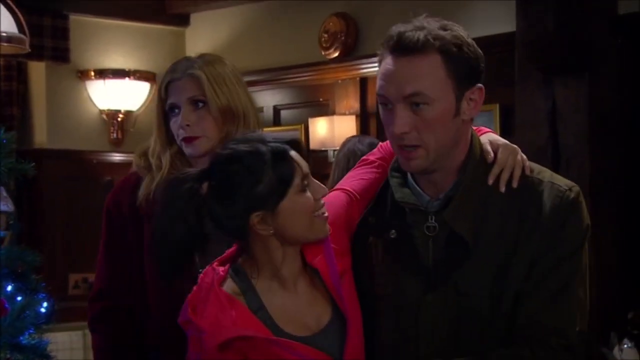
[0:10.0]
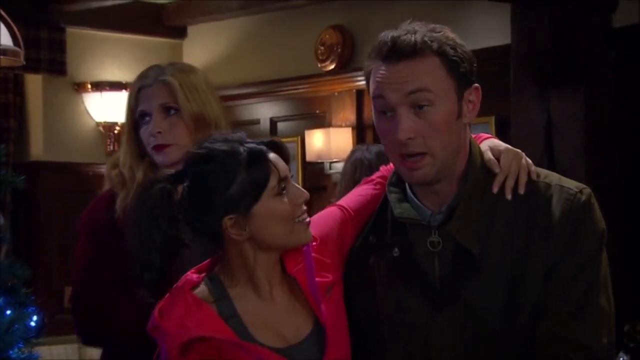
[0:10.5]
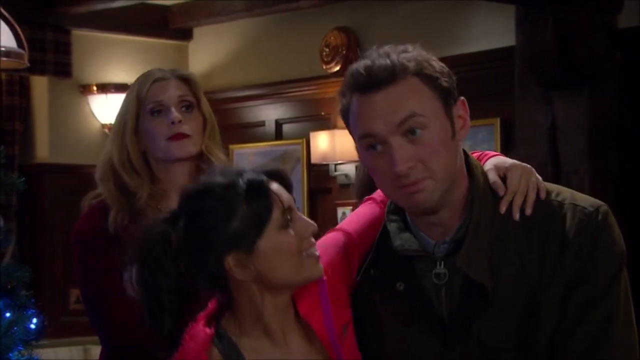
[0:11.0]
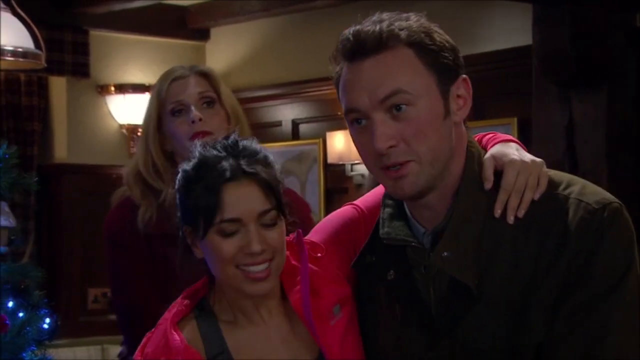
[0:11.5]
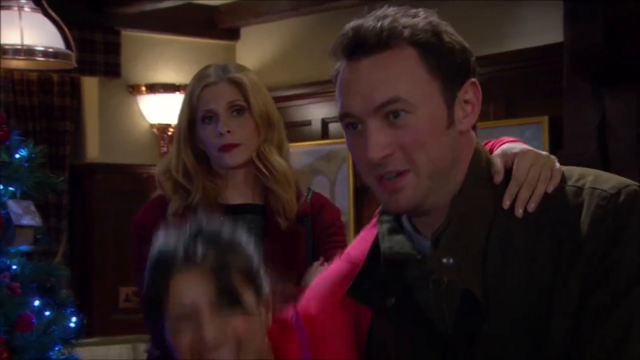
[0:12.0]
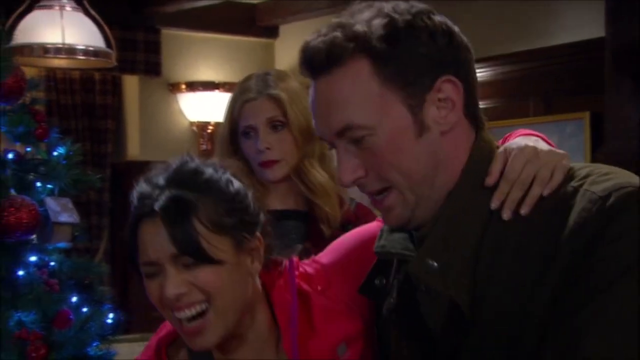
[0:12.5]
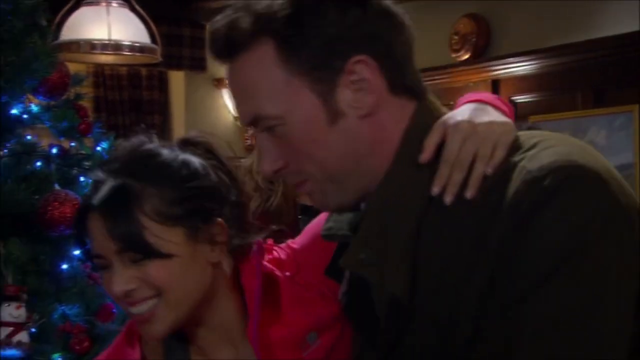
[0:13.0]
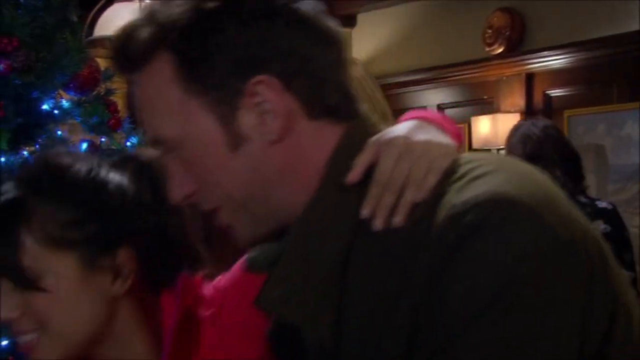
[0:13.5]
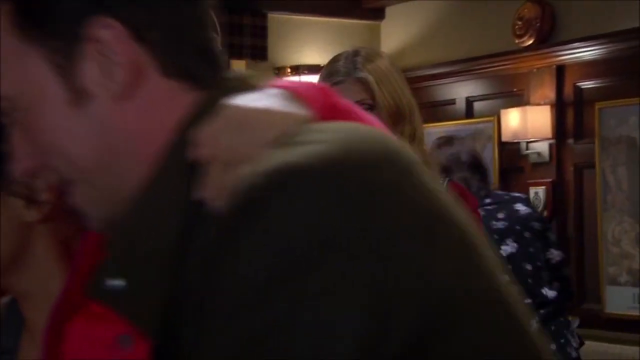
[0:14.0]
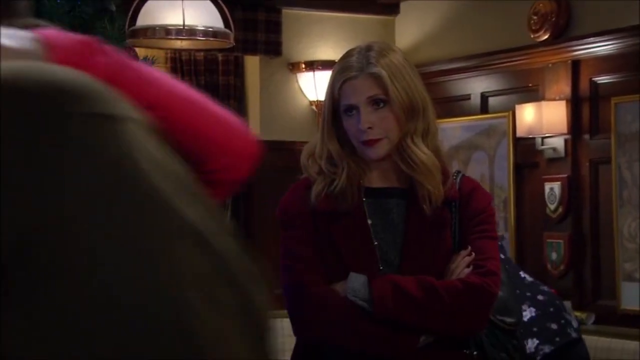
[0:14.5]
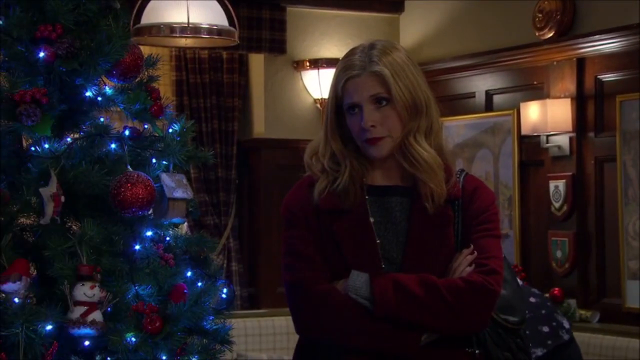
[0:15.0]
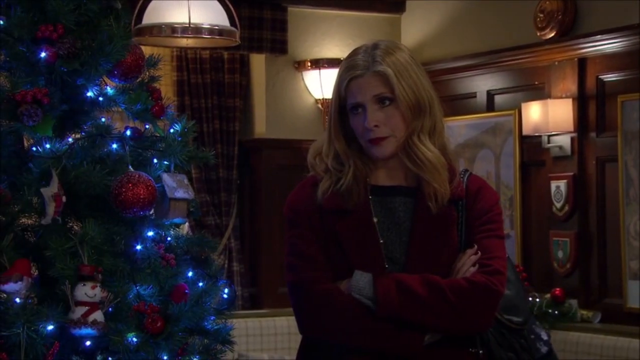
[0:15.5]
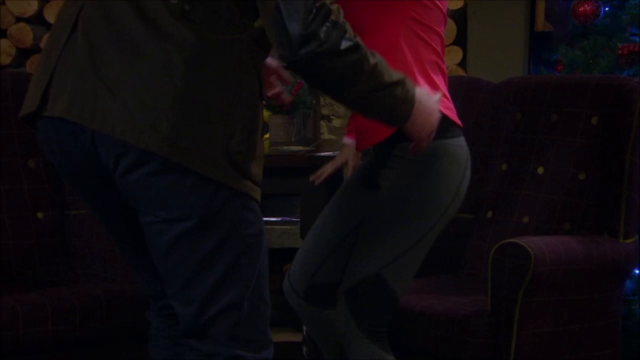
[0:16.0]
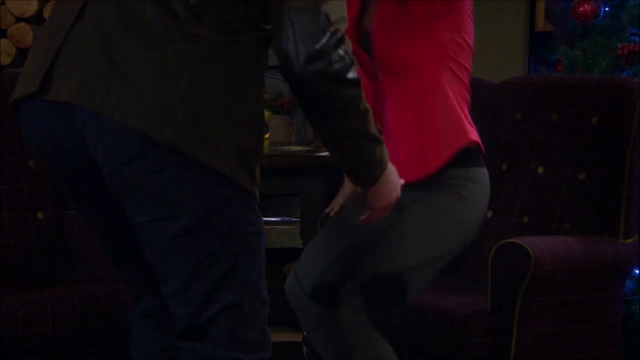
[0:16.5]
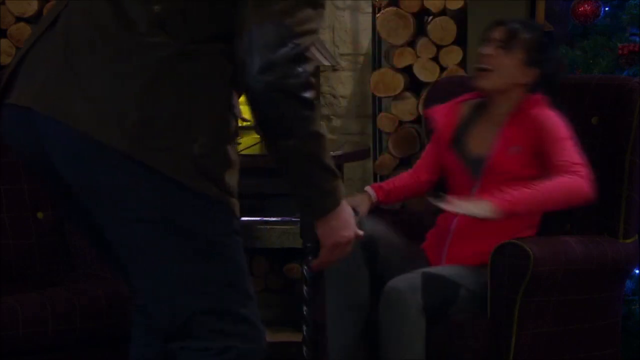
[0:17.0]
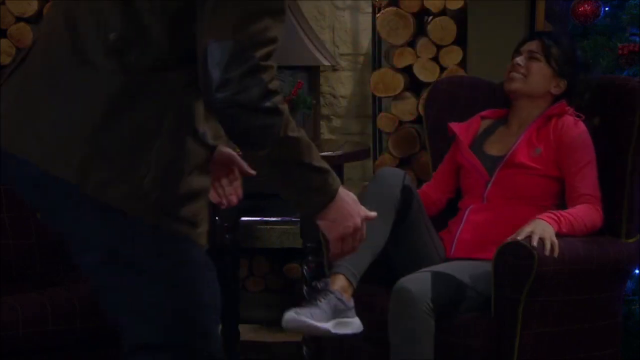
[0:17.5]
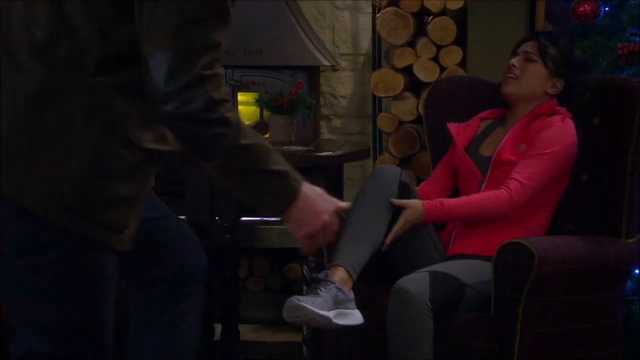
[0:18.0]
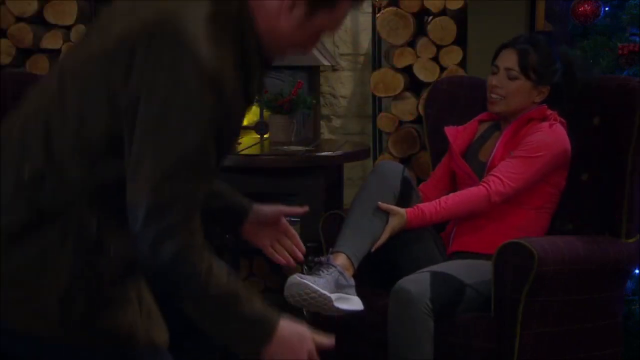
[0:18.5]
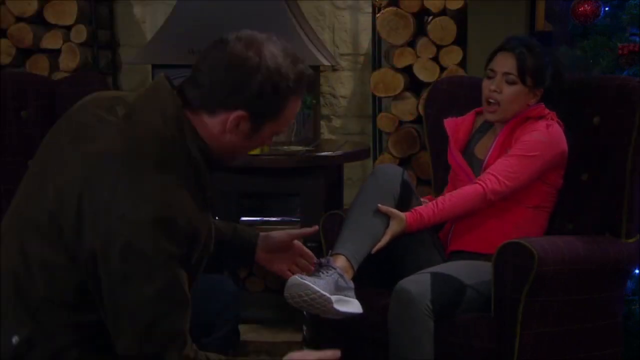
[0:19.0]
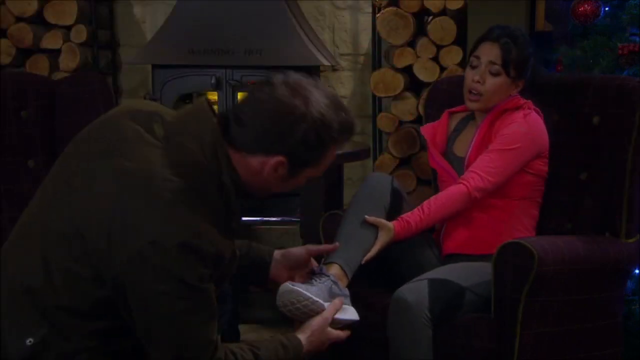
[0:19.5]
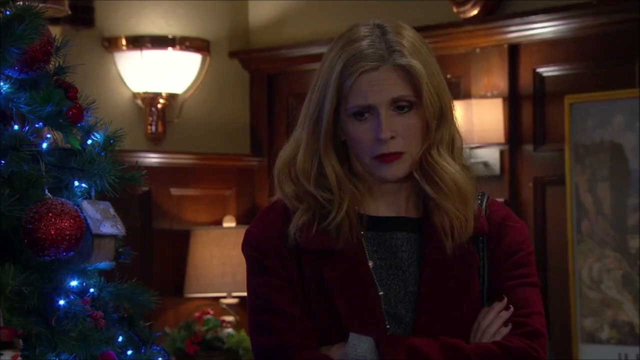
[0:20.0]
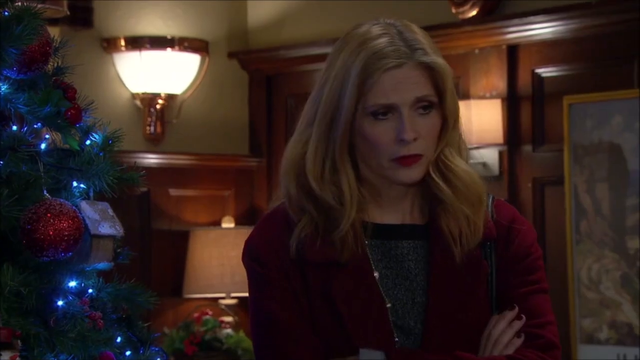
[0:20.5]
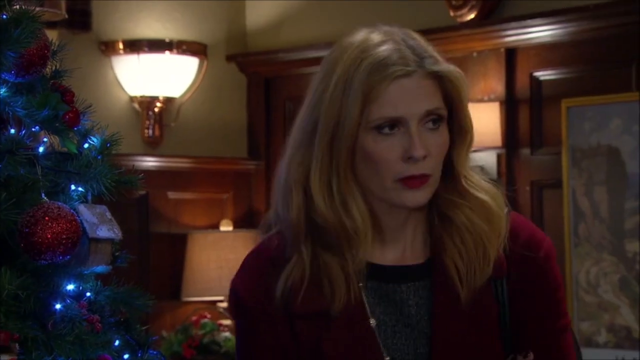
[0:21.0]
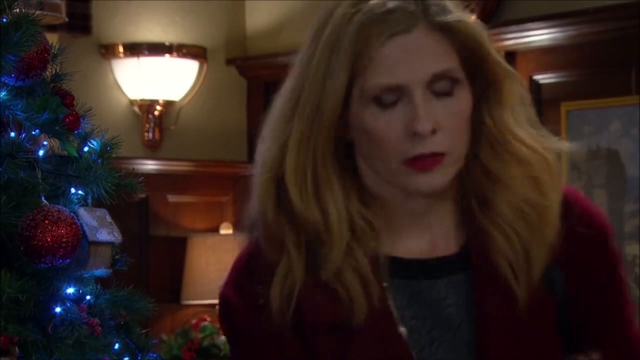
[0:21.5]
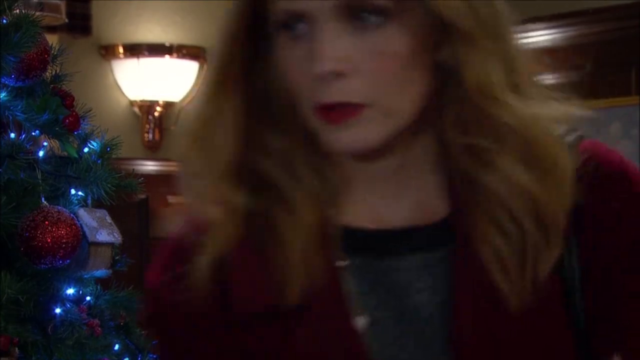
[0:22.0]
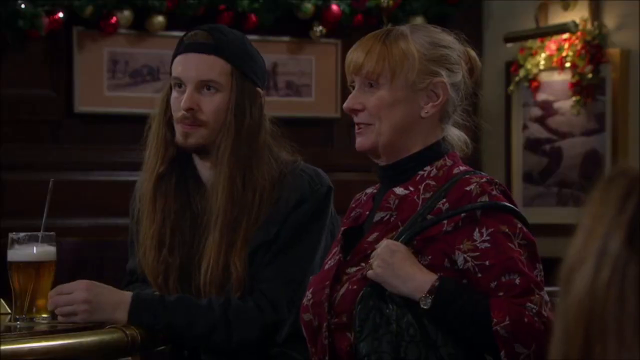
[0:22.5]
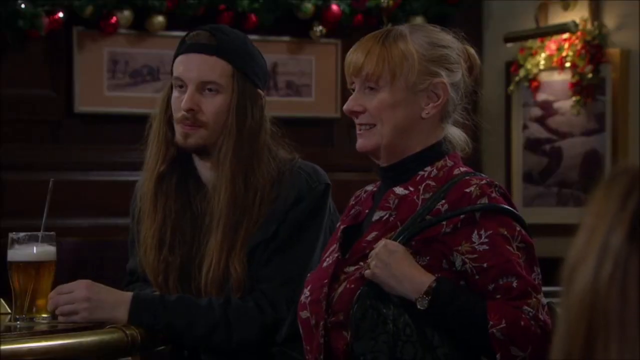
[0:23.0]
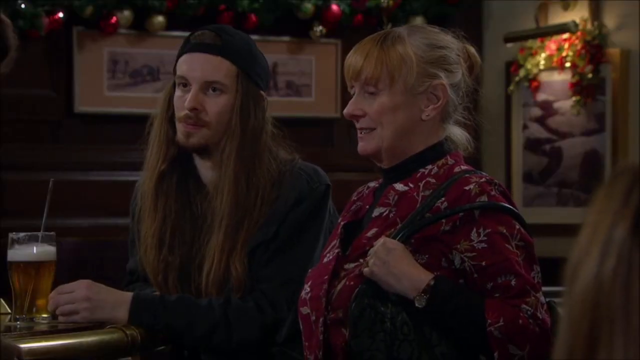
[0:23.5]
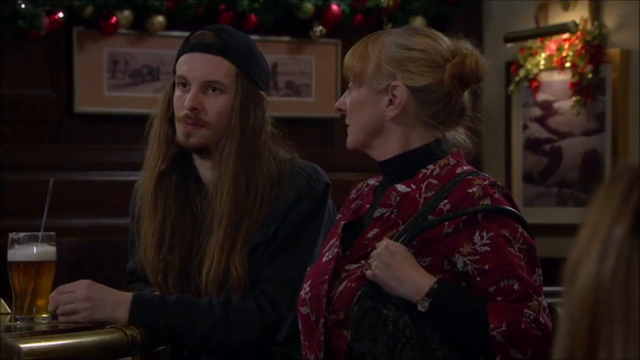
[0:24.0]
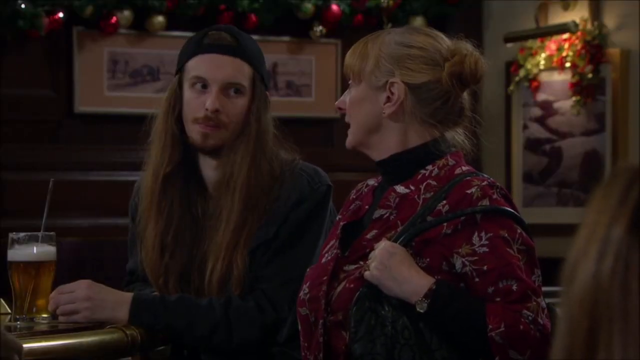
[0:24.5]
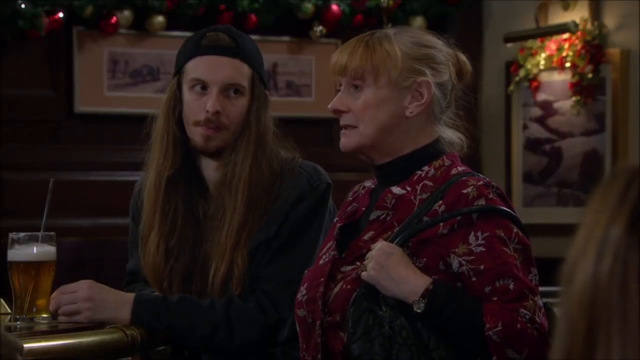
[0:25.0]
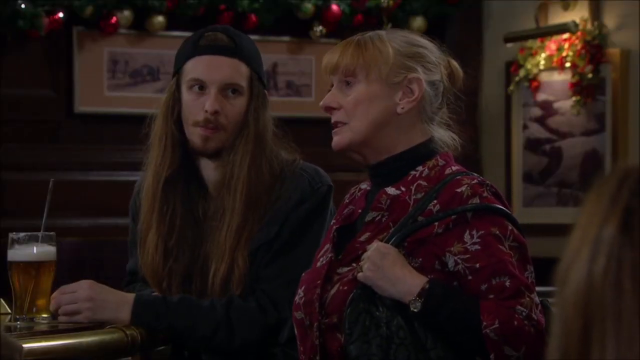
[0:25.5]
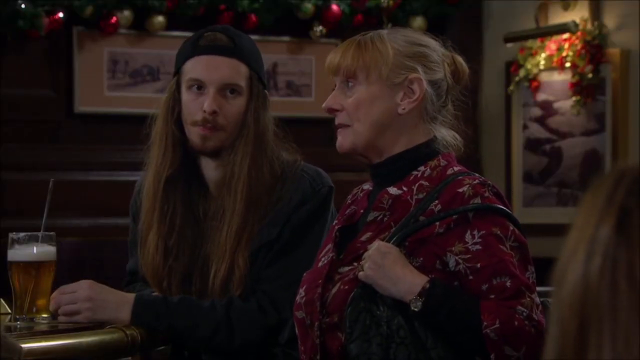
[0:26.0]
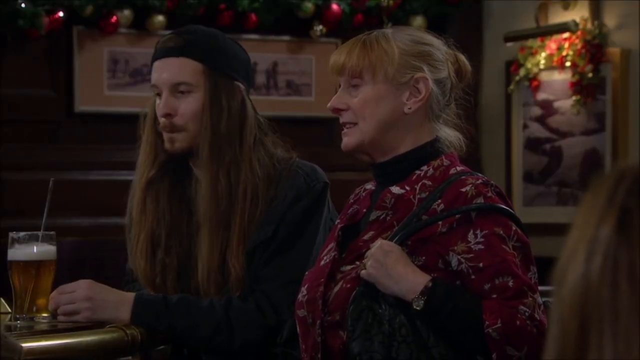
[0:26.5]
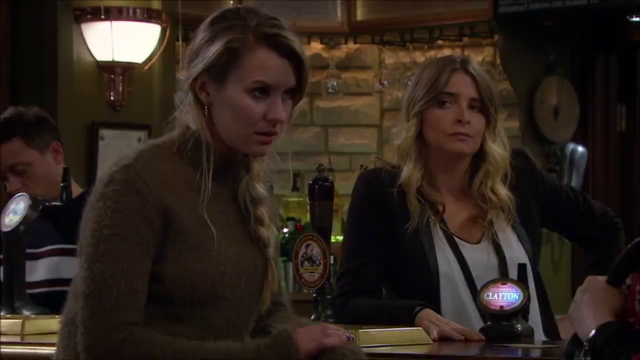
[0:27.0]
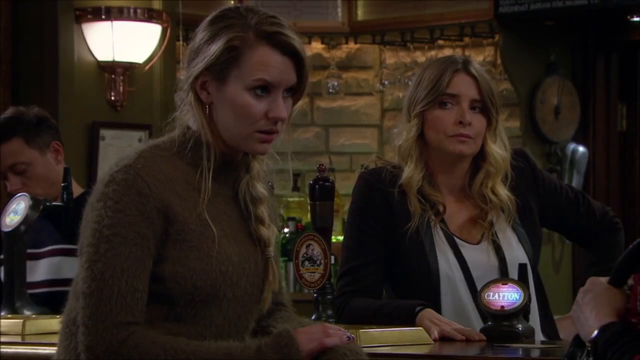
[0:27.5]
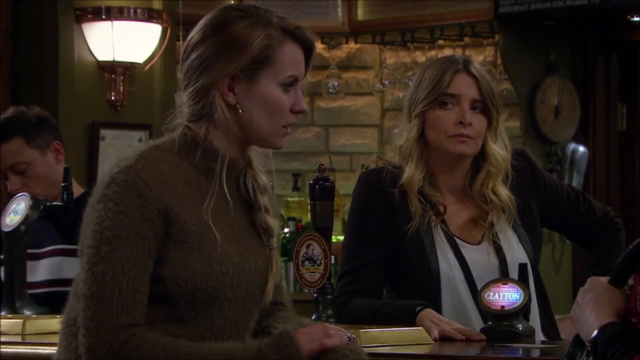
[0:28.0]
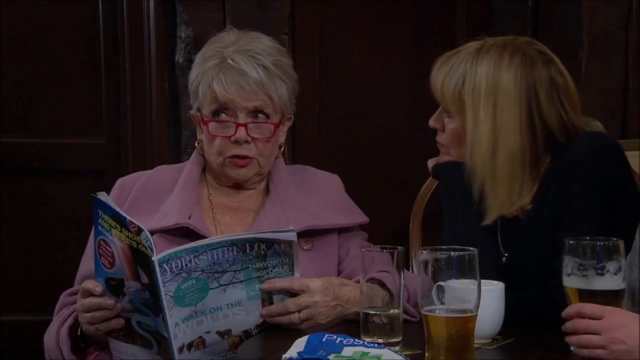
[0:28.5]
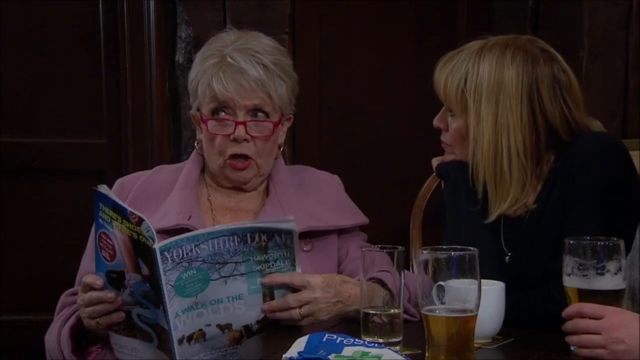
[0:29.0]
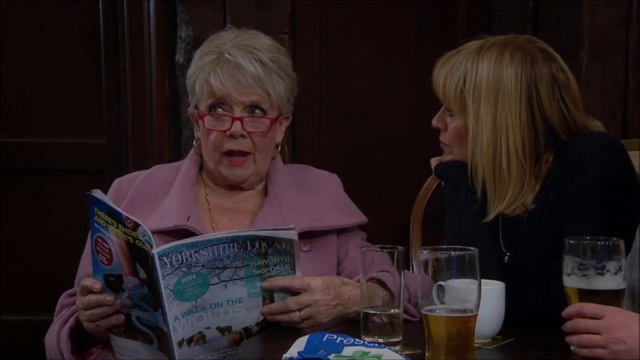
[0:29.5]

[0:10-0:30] The scene continues in the bar-type setting: there are lamps, it is dark and intimate, and there is wood paneling everywhere. The young woman with black hair up in a ponytail, wearing a red jacket with a black shirt, has an arm around the man, who wears a brown jacket and has a clean-shaven face. He says something to her and laughs as he walks her to her chair. Behind her, the same older lady with long blonde hair, red jacket and black shirt seems completely annoyed; she rolls her eyes as they walk, her arms crossed. The man leads the injured woman to a wingback chair and she sits down, in a lot of pain. She looks like she is wearing workout clothes, and she holds what appears to be her calf or ankle. The man goes down to look at her calf and ankle. The blonde lady in the red jacket and black top rolls her eyes and walks off screen, away from them. The older lady from the opening scene with the funky top, a very old lady with a lot of wrinkles carrying some weight, holds a purse; her hair is all messed up in the back. She witnesses the situation and is kind of having a conversation about it with the younger man with very long hair and a black baseball cap. More Christmas decorations and pictures are in the background, and there is a beer. The two blonde ladies who were with them, one in a brown sweatshirt with her hair in a braid, and what looks like the bartender, with blonde hair, a black jacket and a white top, are looking on and don't look happy. The older lady from the background who was sitting and eating, wearing a pink jacket and red glasses and reading a magazine, is saying something to the two ladies she is with.